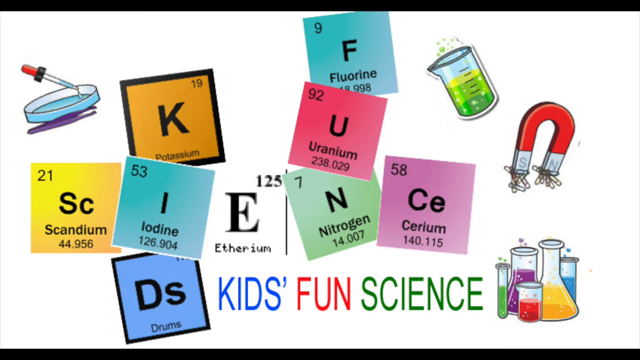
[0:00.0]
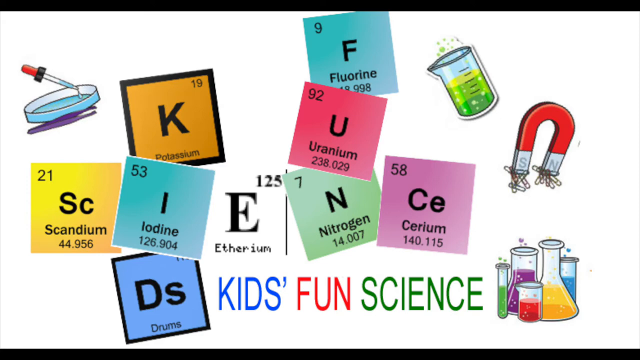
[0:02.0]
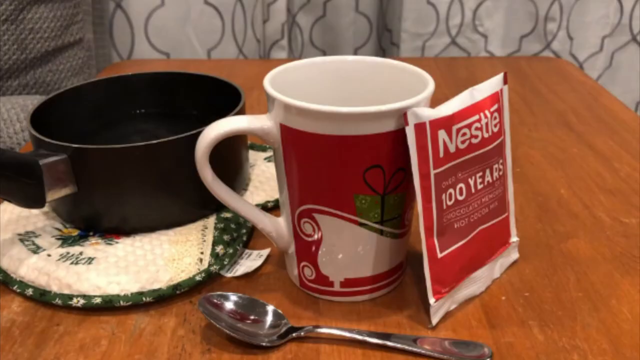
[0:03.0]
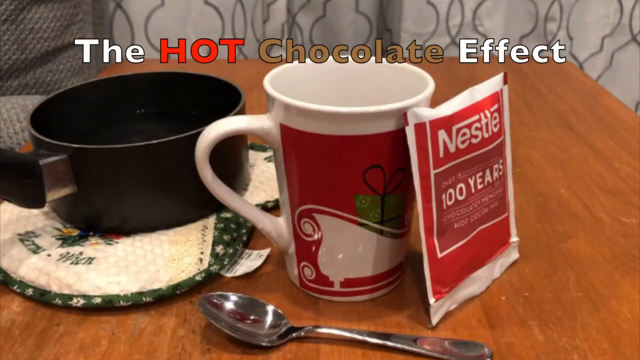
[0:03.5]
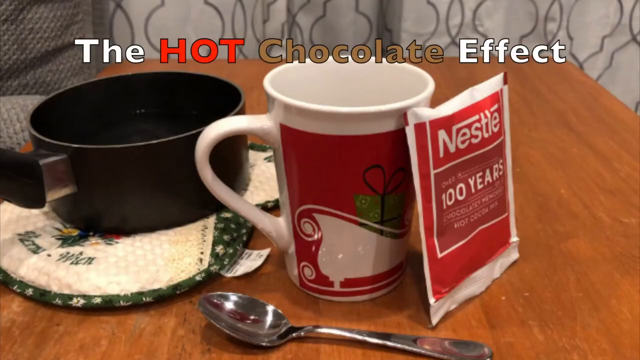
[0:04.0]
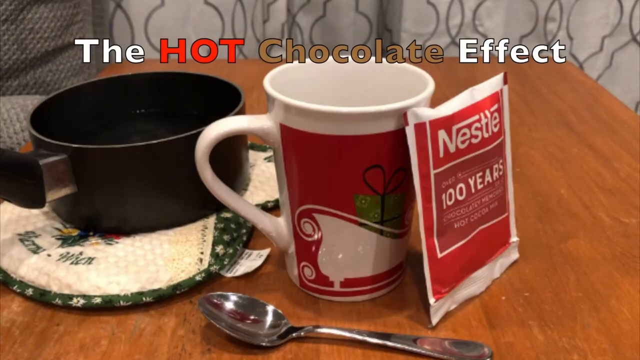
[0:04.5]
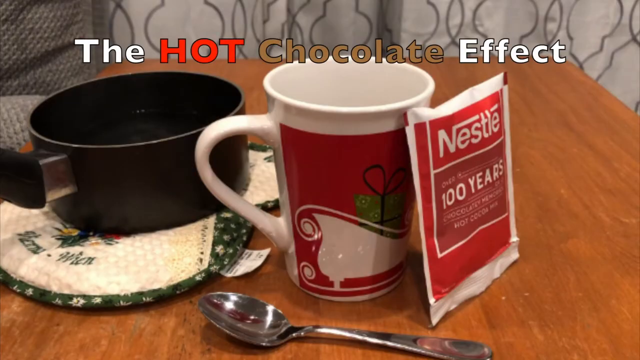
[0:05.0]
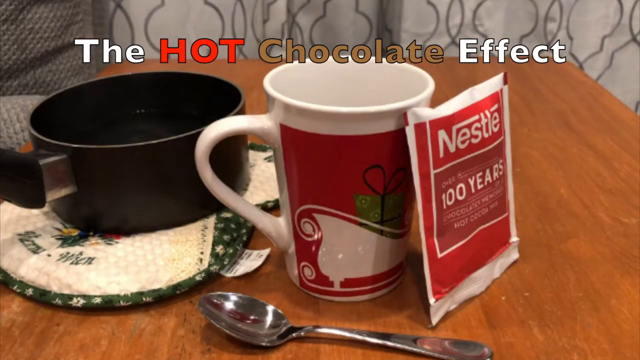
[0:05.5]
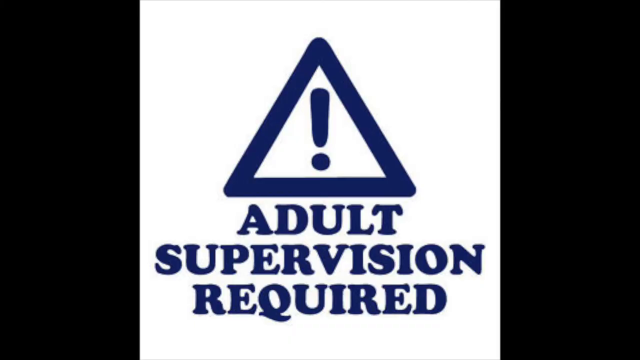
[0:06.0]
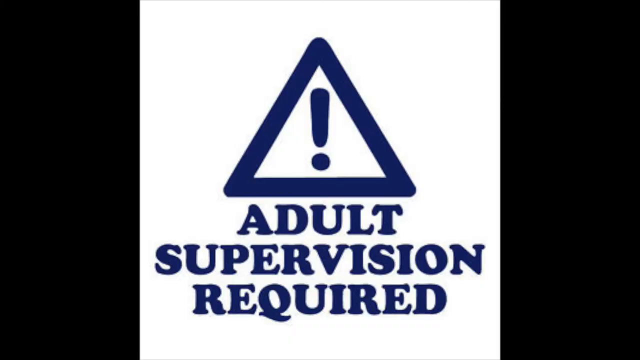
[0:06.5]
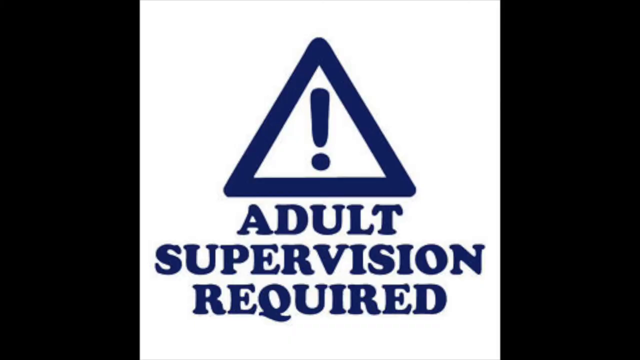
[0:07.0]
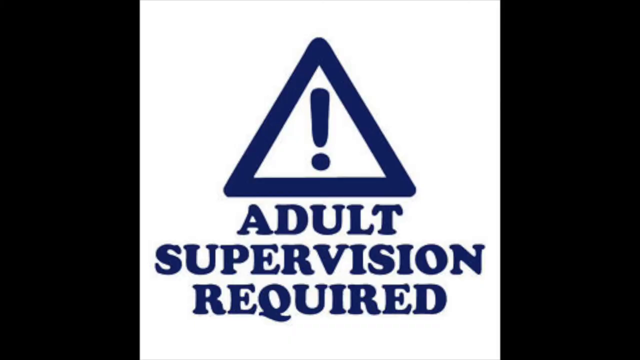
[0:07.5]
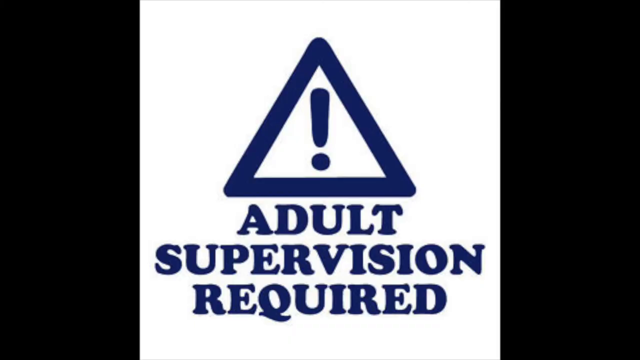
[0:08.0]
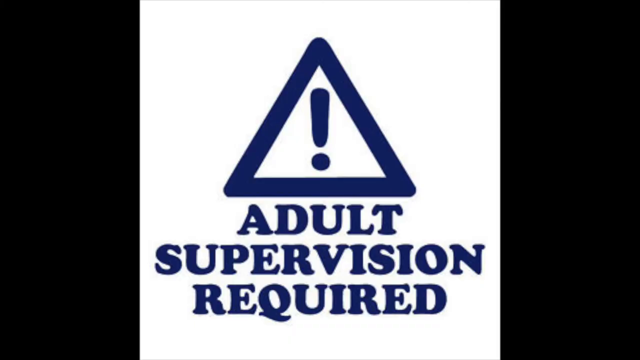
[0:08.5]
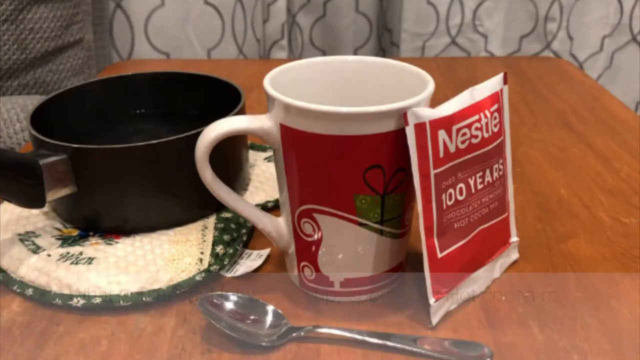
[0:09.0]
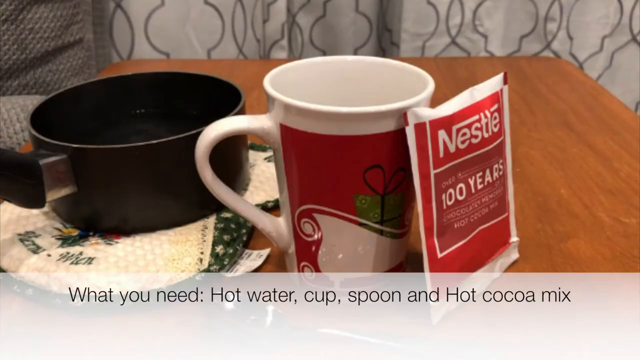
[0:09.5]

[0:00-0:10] The video opens with an introductory slide that reads "kids, fun, science" along the bottom. Many individual squares from the periodic table of elements are scattered across the screen. A cartoon graphic of a pipette and Petri dish is in the top left. On the right are a beaker filled with green bubbling liquid and a horseshoe-shaped magnet with a bunch of paper clips stuck to it, and more beakers and vials appear in the bottom right. The next screen reads "the hot chocolate effect" and shows a small wooden table holding a pot on top of an oven mitt, an elongated Christmas-themed mug, a spoon, and a Nestle dry packet of hot chocolate. Then, in very big blue text on a white background beside a triangle containing an exclamation point, the words "adult supervision required" appear.